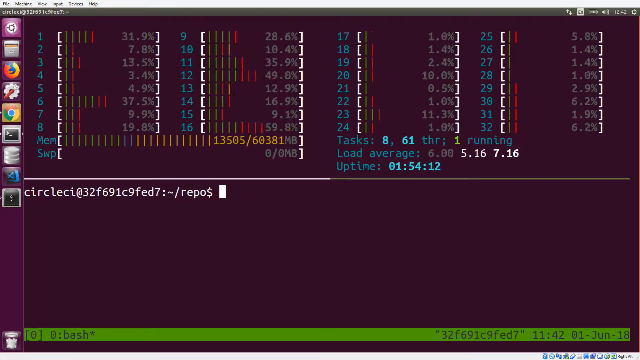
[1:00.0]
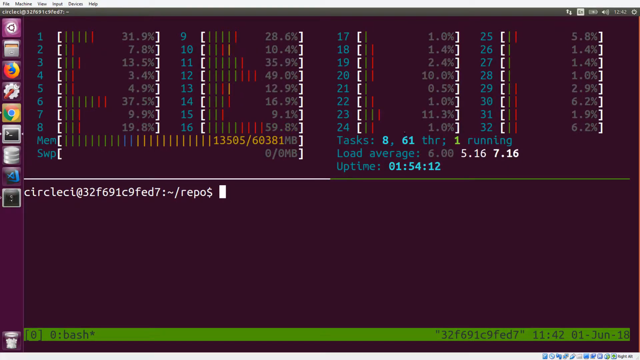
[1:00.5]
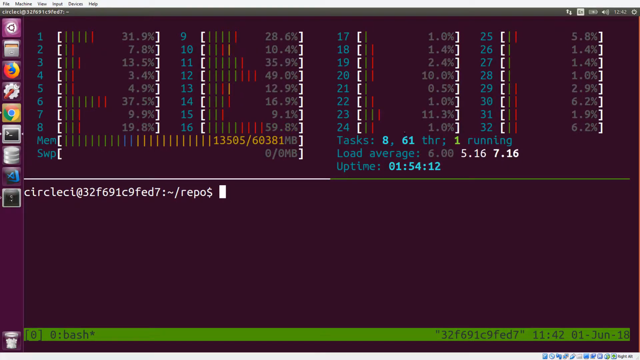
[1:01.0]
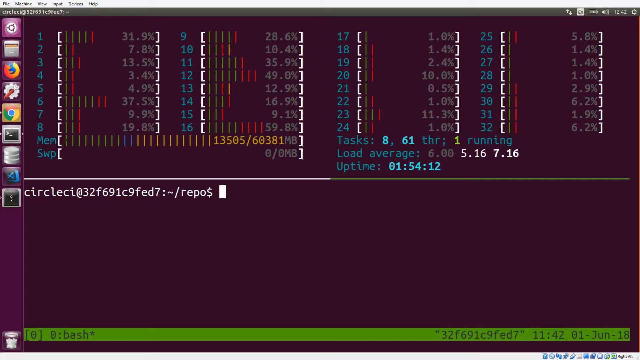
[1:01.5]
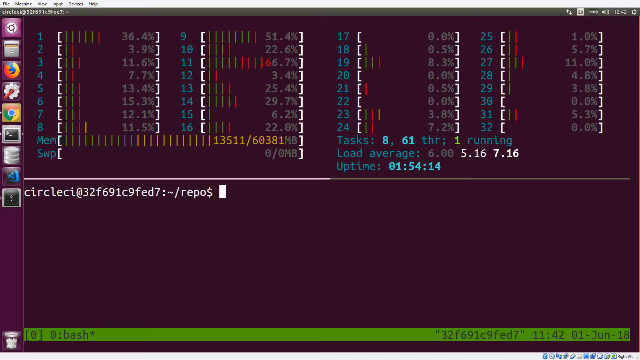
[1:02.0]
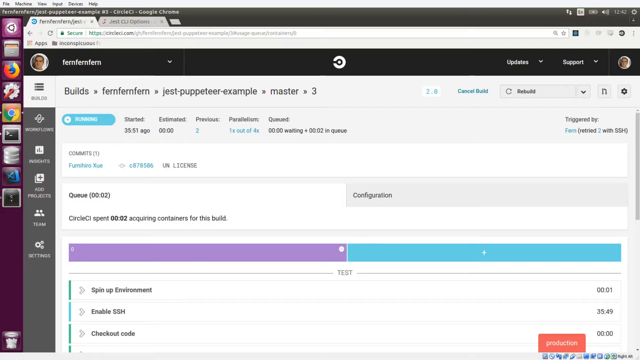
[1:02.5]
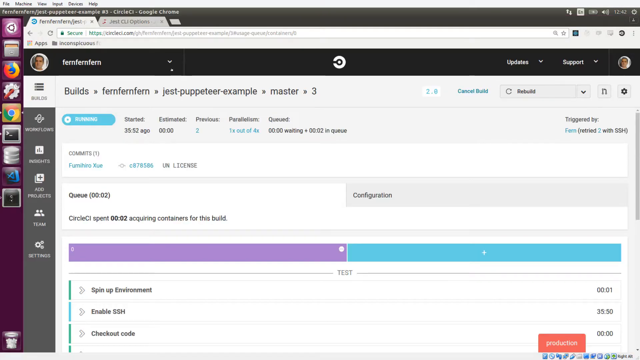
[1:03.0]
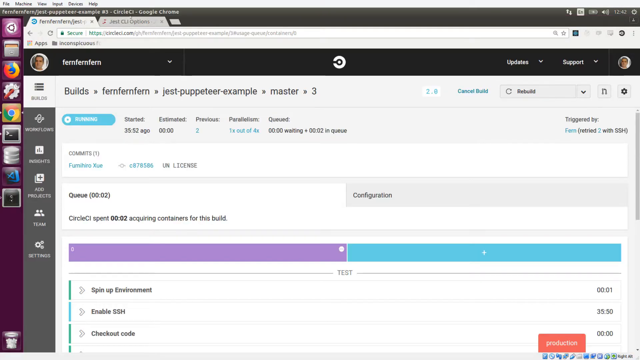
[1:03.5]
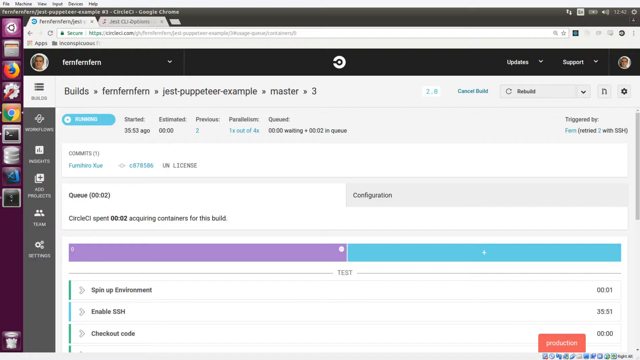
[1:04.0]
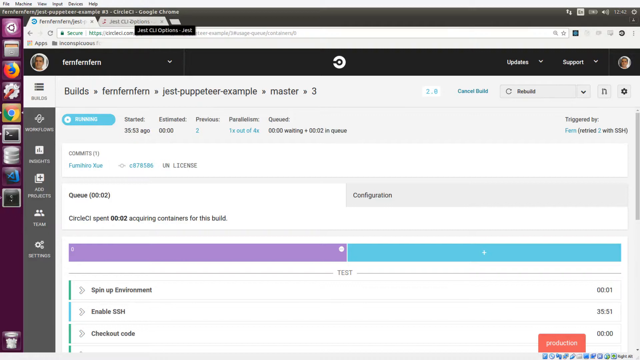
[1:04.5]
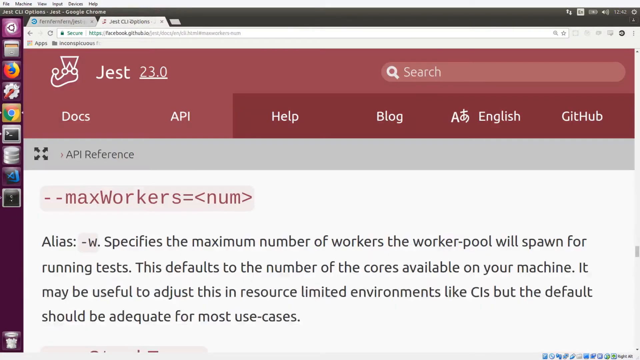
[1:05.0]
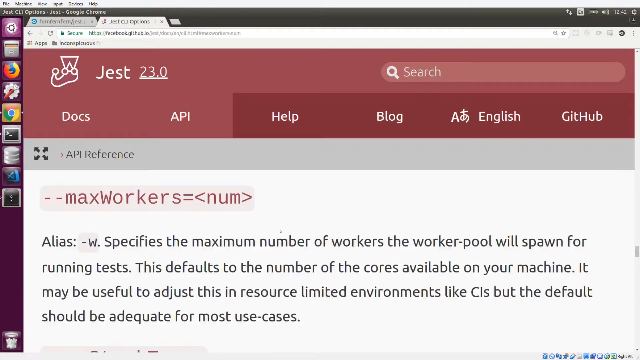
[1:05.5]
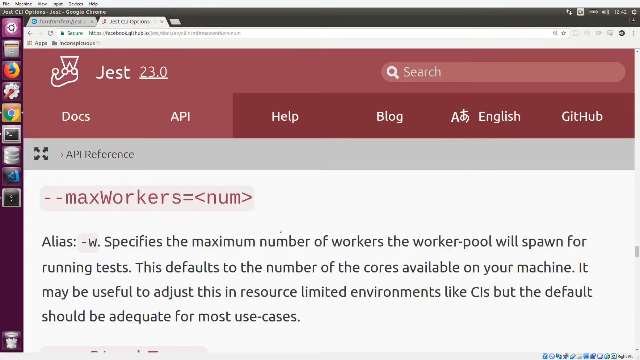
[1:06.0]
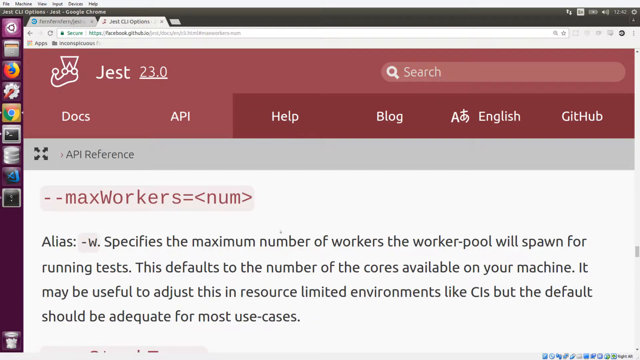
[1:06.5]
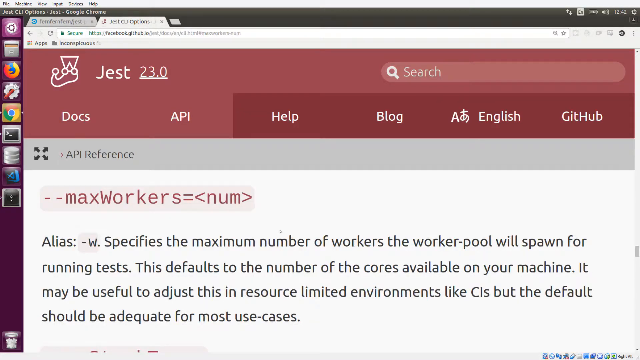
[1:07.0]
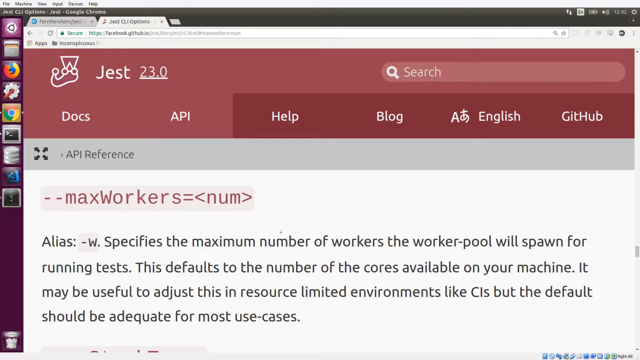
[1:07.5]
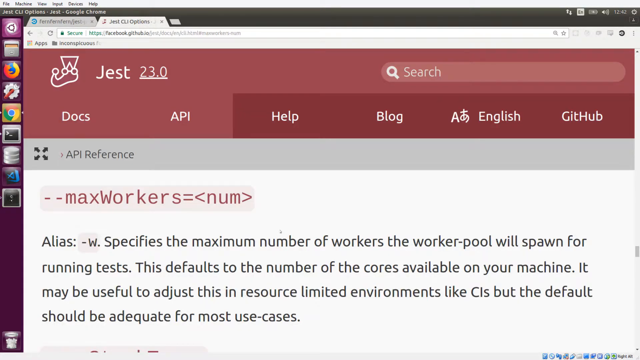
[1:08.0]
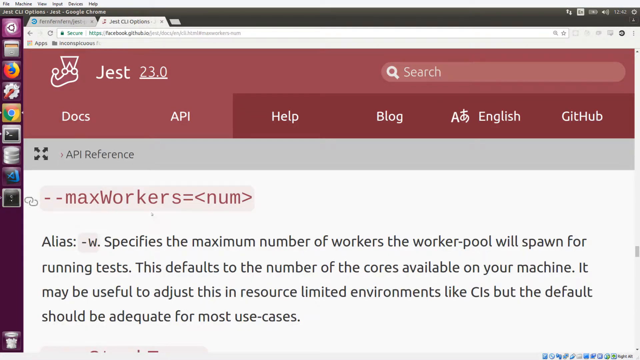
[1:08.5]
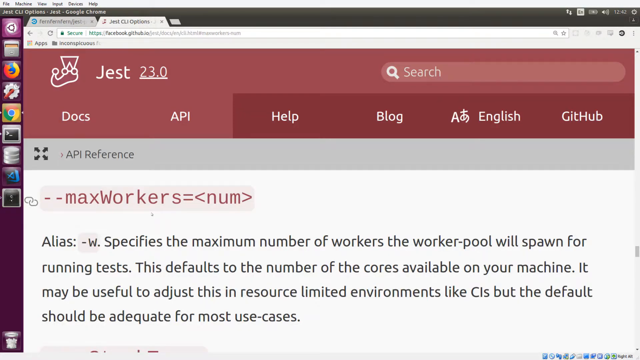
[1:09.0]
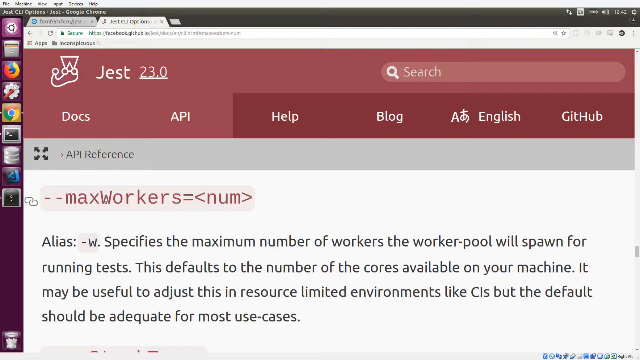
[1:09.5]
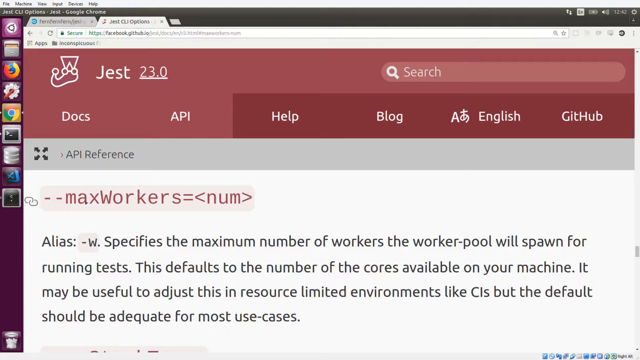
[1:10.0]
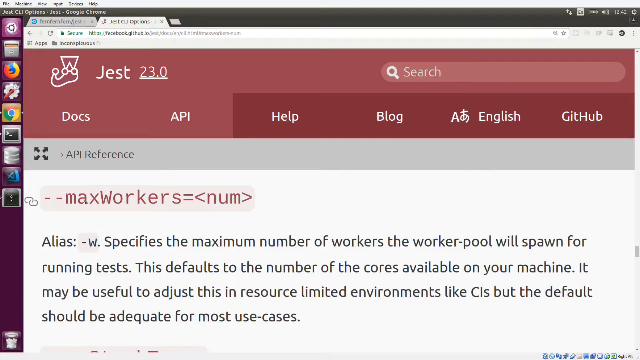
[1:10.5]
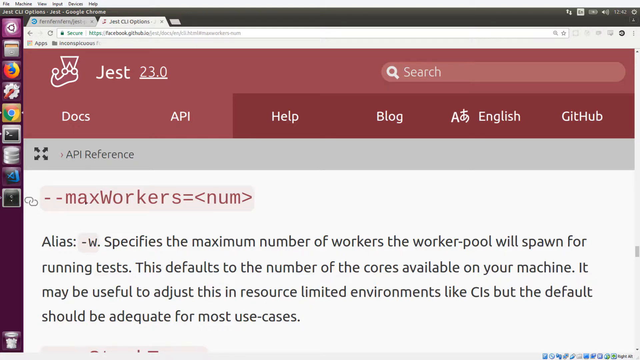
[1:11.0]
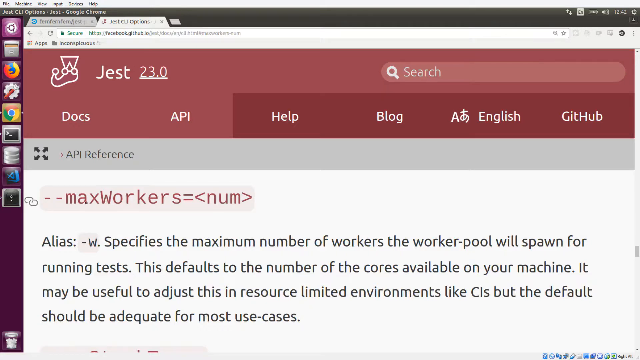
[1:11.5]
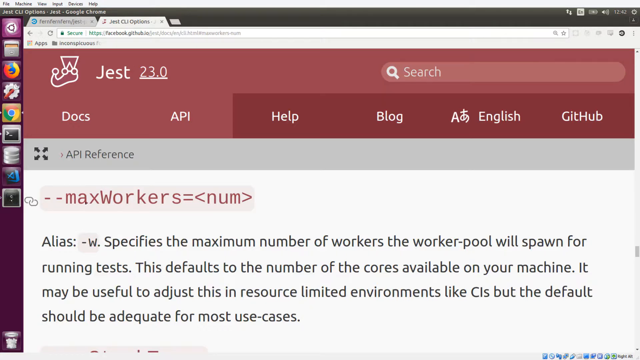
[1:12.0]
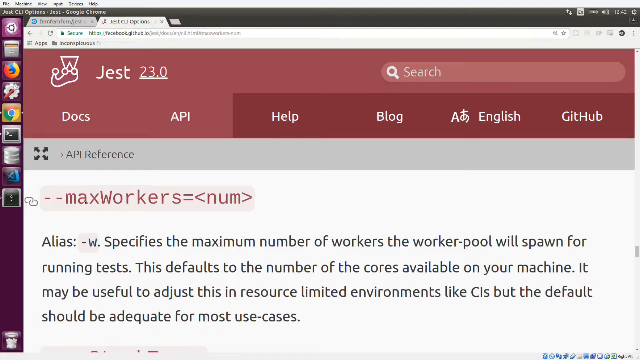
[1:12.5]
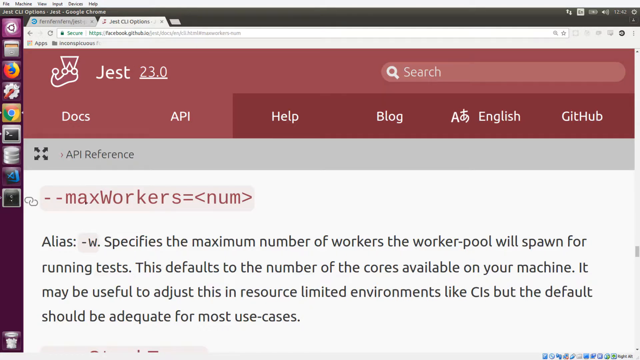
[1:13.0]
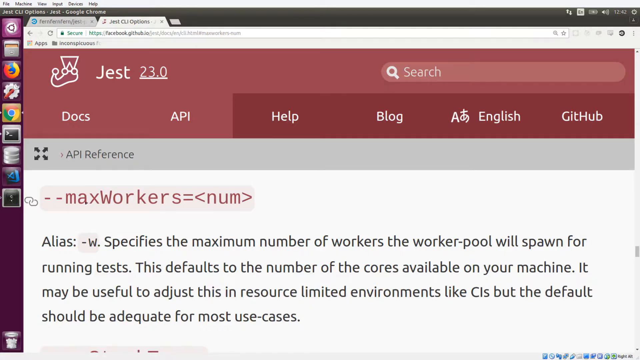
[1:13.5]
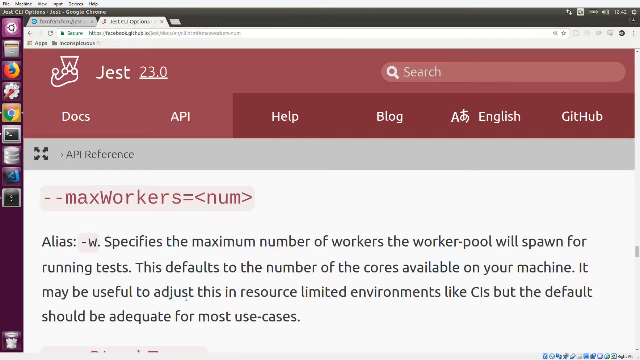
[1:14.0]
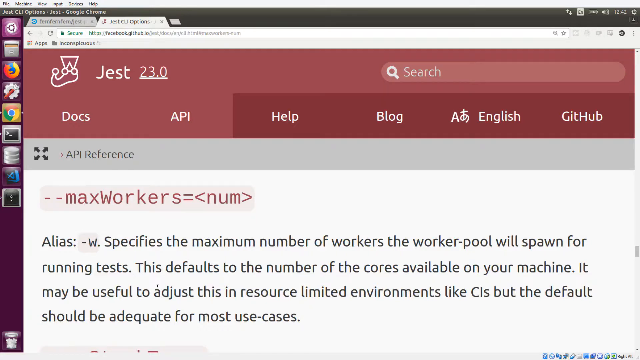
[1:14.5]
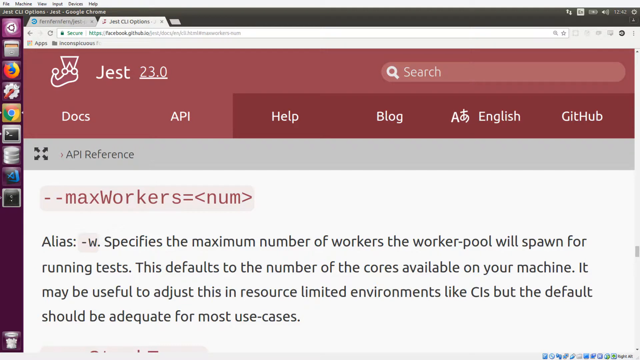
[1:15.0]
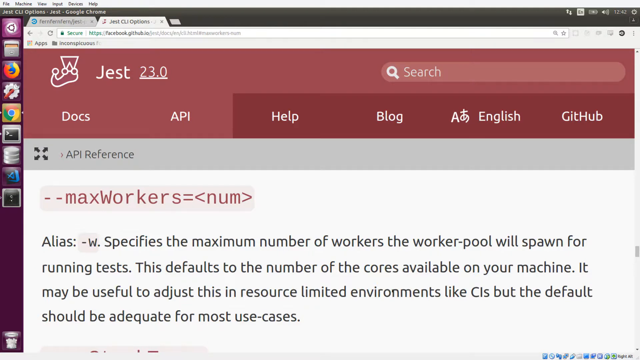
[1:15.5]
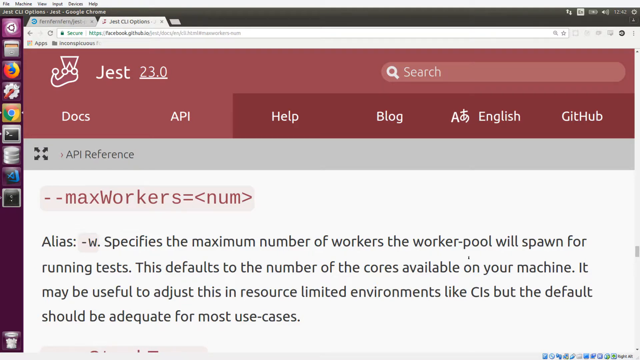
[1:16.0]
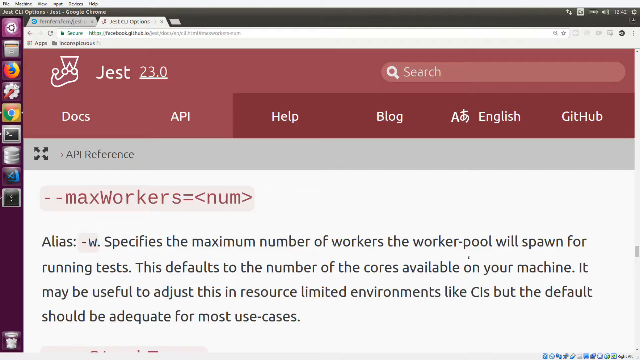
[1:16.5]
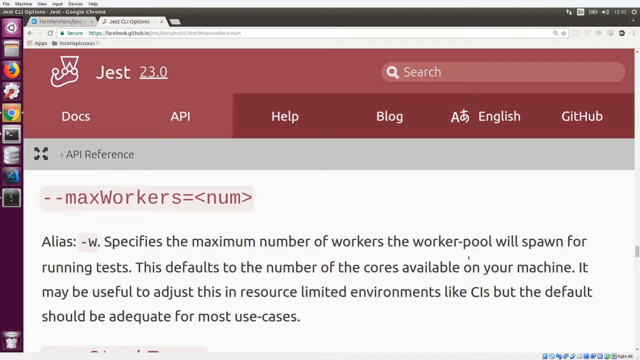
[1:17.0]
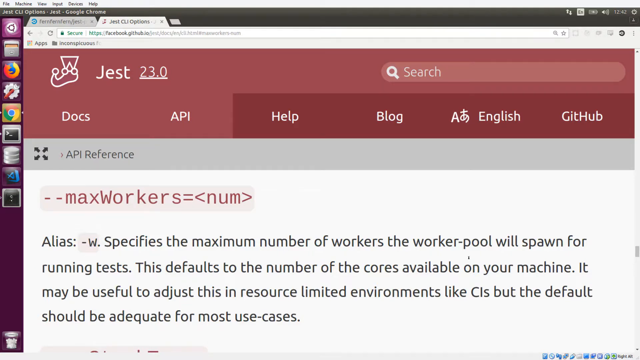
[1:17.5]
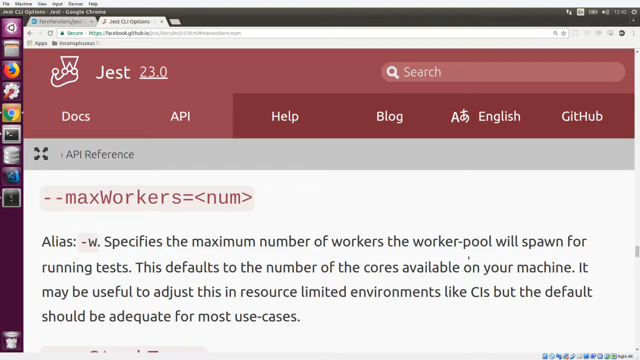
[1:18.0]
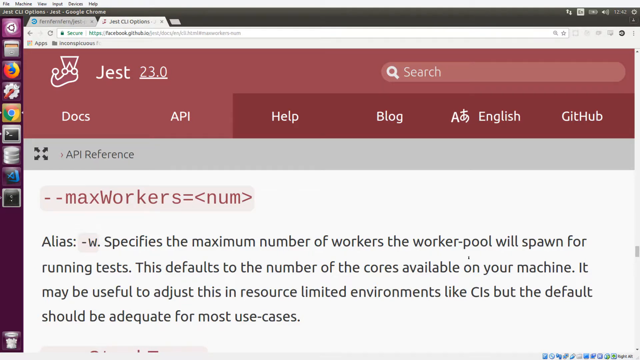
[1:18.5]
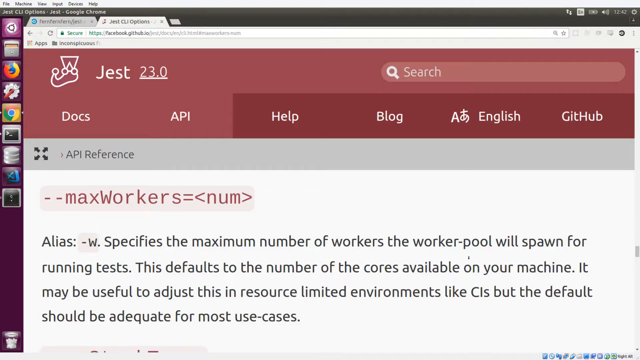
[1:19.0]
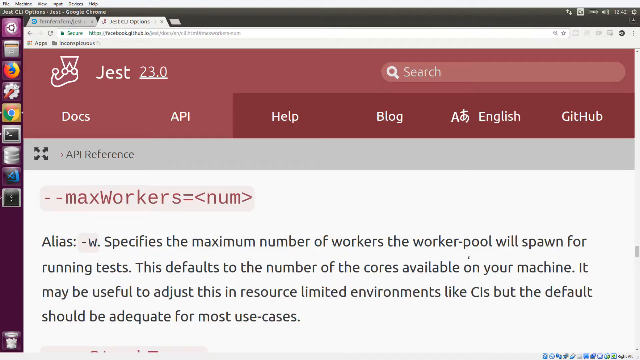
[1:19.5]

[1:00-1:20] The screen continues to show data with lots of numbers. Someone clicks between tabs. Text on the page reads "specifies the maximum number of workers the workers pool will spawn for running tests." The page seems to give definitions of terms used to run the program. GitHub and API are visible on the page. Some of the terms appear to be defined along with the tag needed to set that parameter.